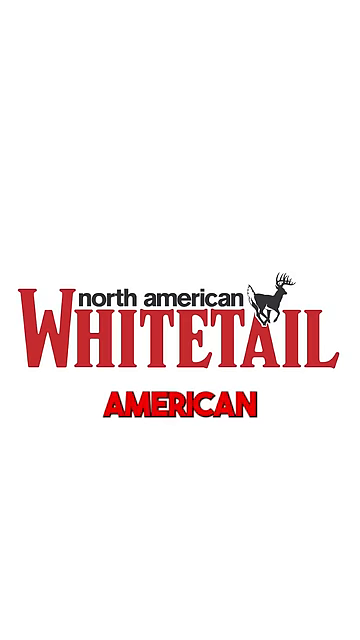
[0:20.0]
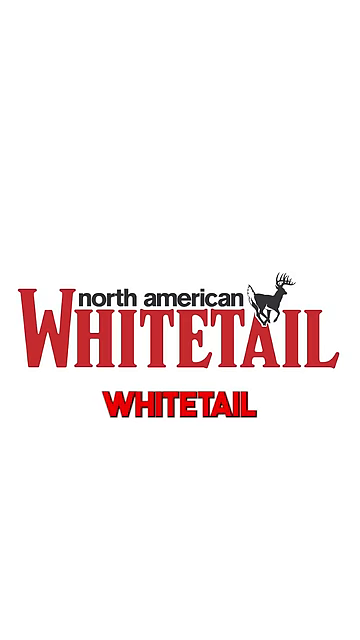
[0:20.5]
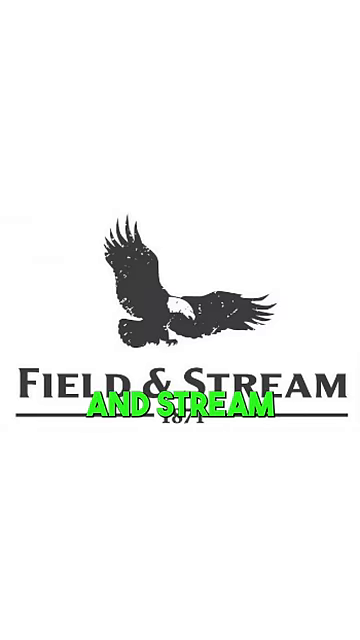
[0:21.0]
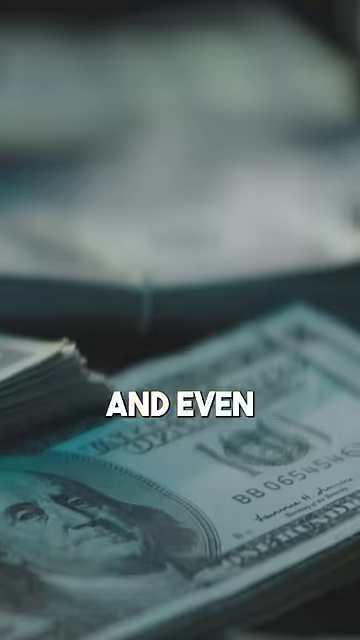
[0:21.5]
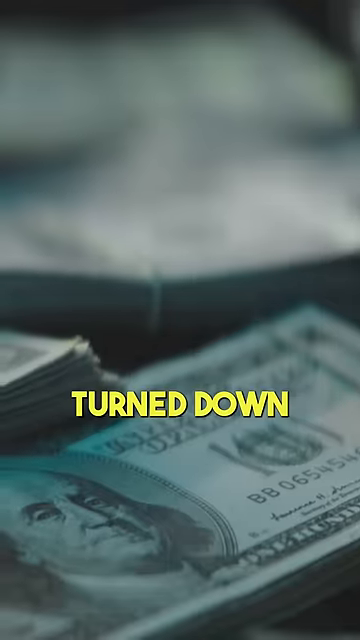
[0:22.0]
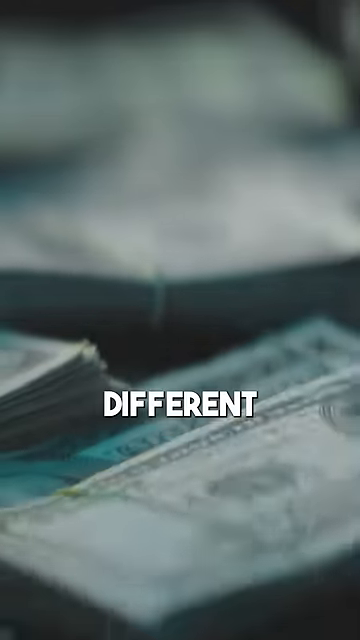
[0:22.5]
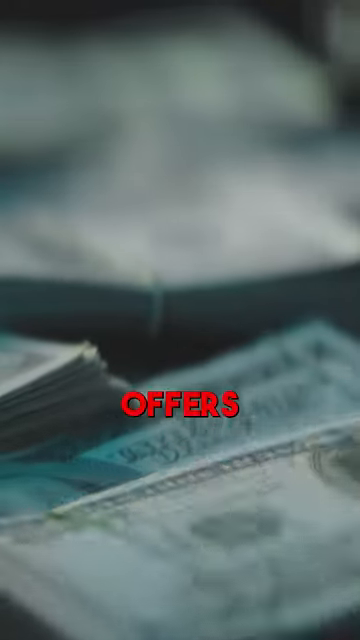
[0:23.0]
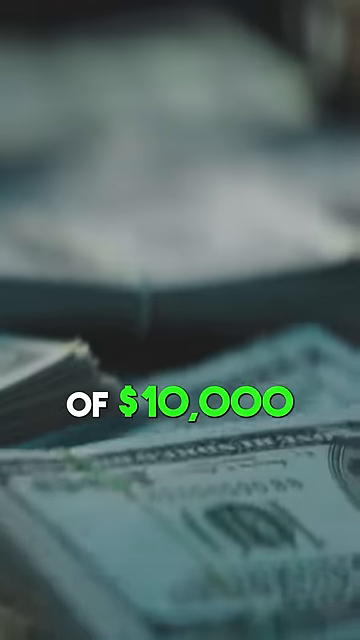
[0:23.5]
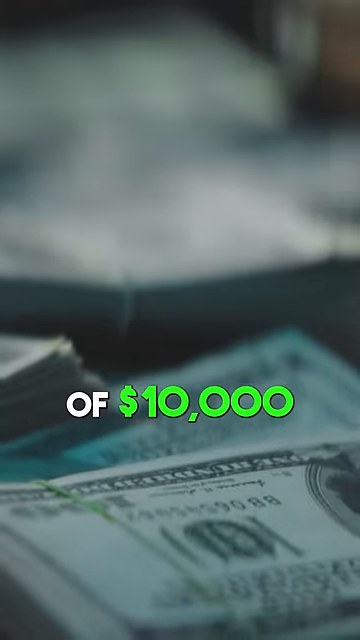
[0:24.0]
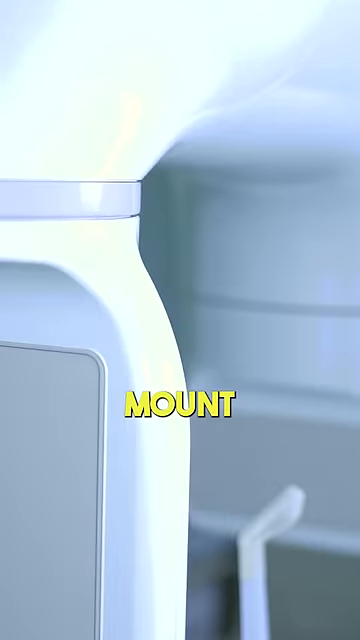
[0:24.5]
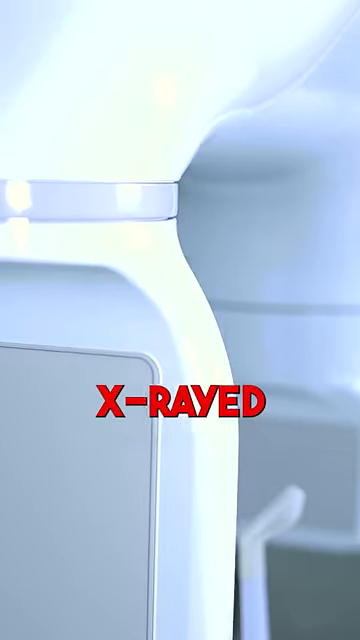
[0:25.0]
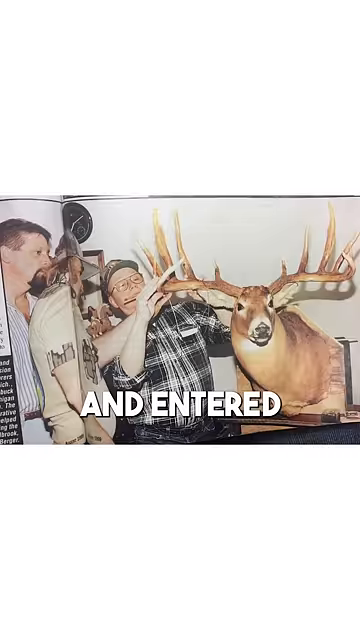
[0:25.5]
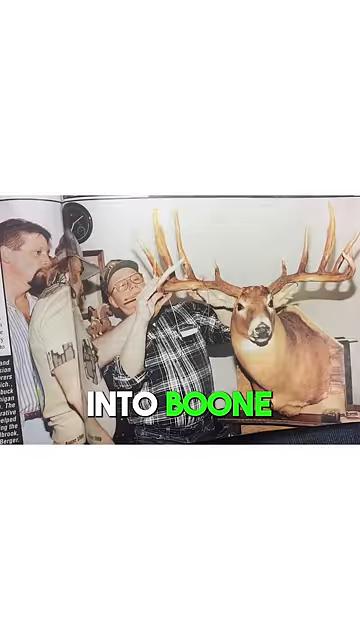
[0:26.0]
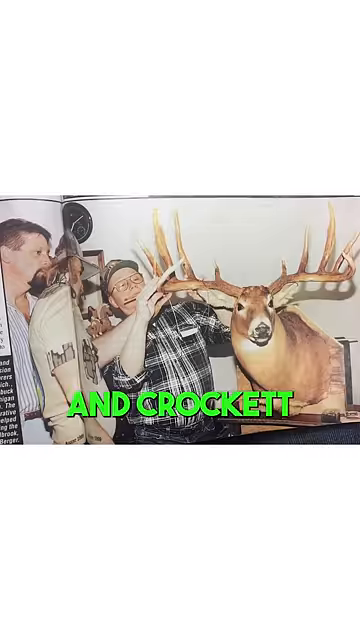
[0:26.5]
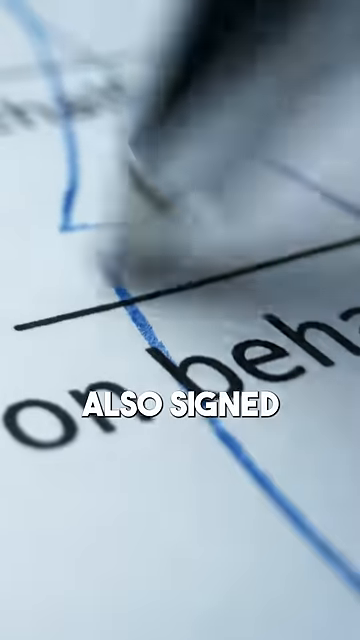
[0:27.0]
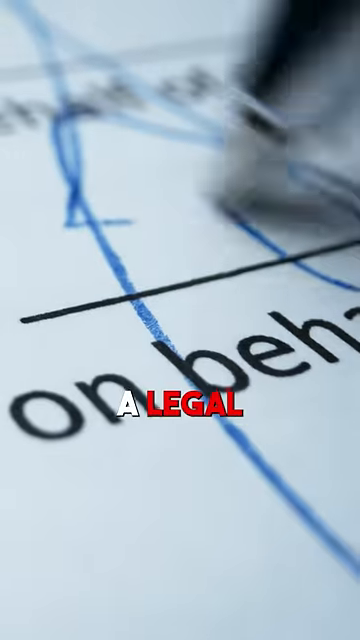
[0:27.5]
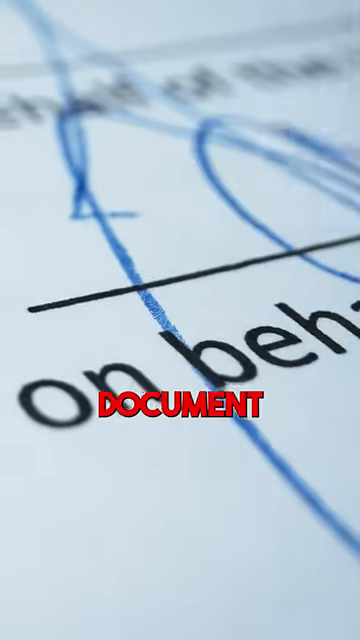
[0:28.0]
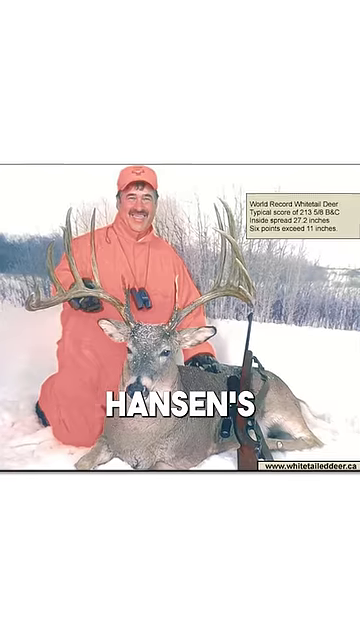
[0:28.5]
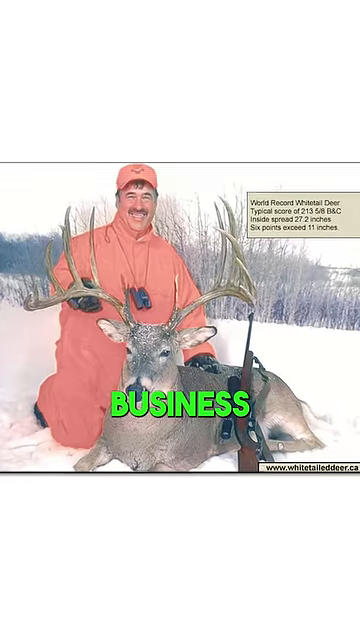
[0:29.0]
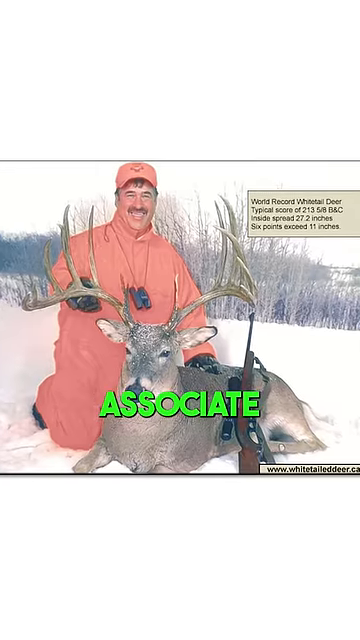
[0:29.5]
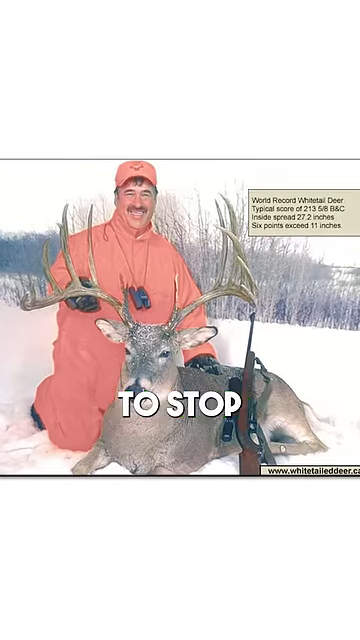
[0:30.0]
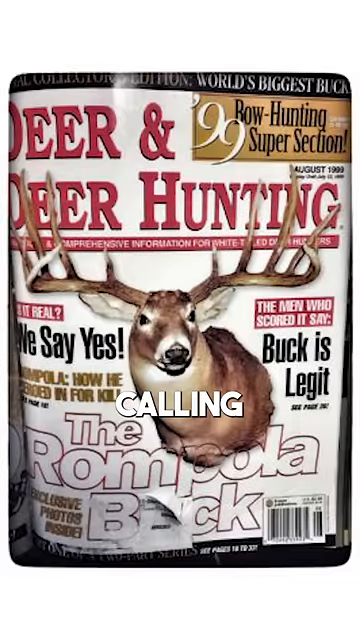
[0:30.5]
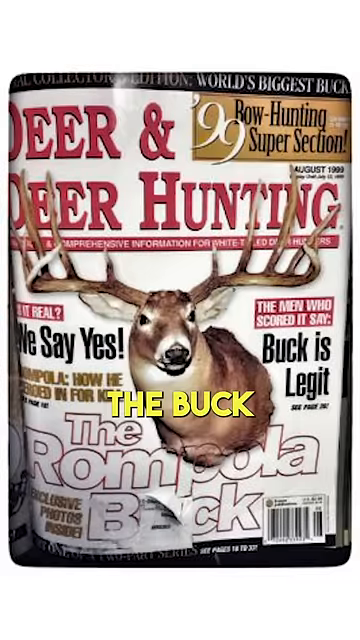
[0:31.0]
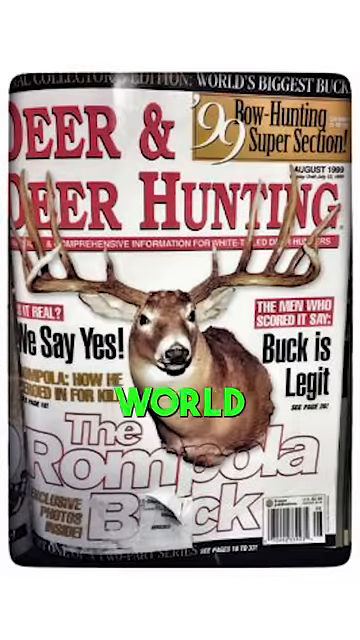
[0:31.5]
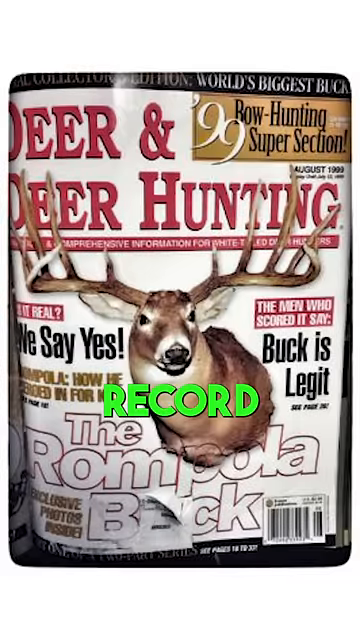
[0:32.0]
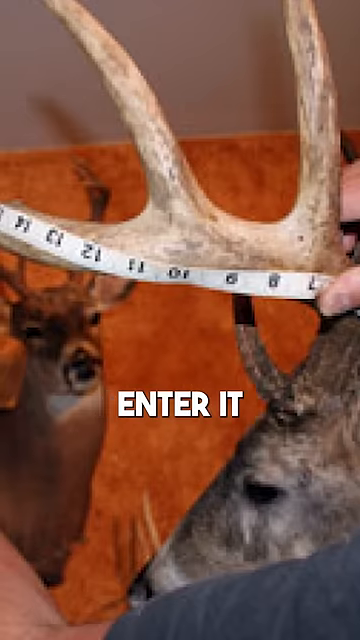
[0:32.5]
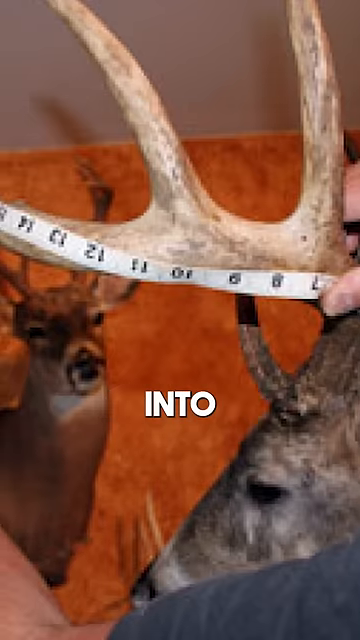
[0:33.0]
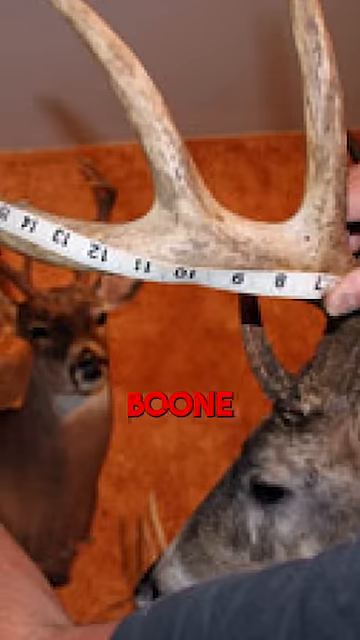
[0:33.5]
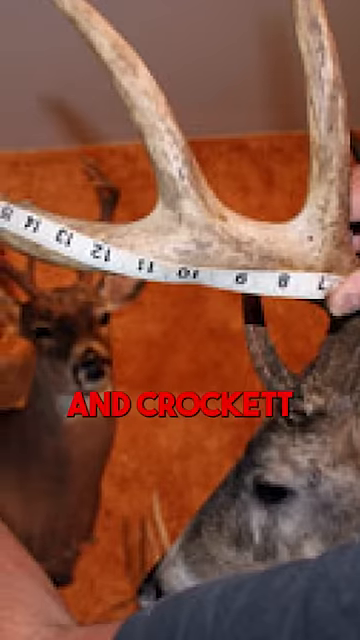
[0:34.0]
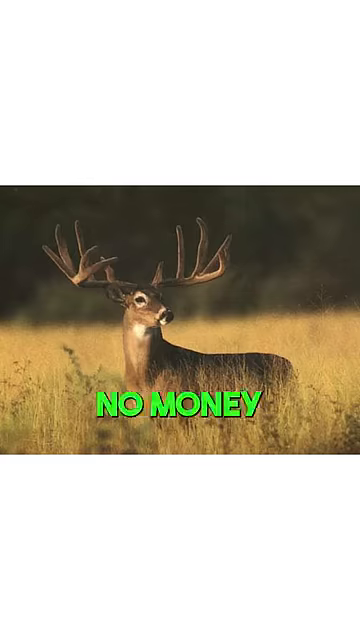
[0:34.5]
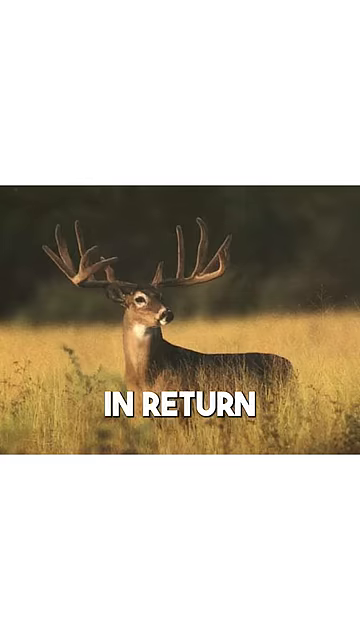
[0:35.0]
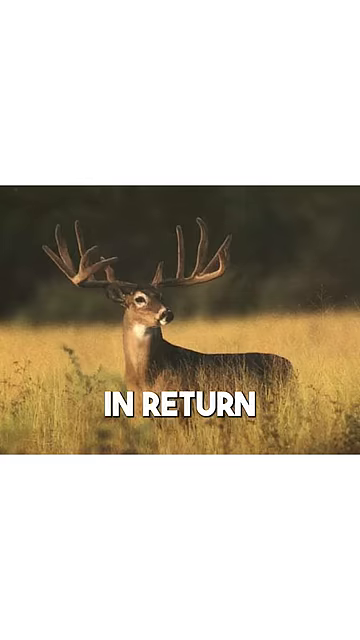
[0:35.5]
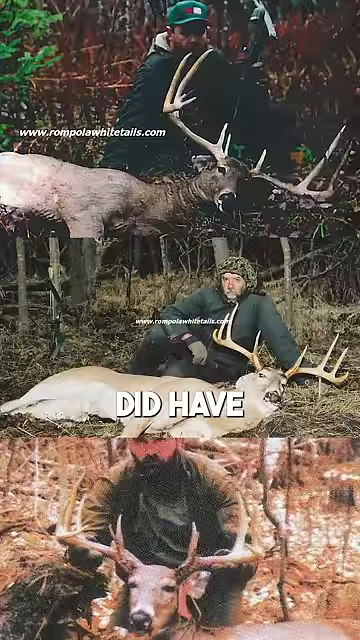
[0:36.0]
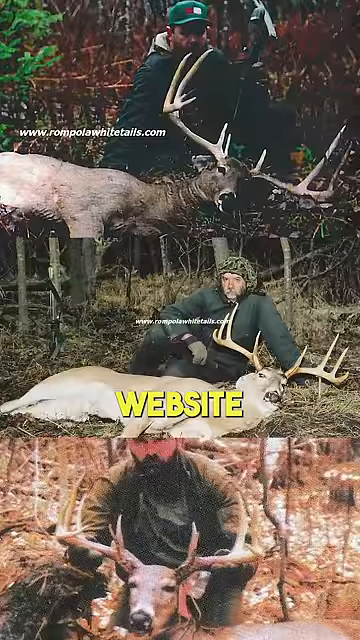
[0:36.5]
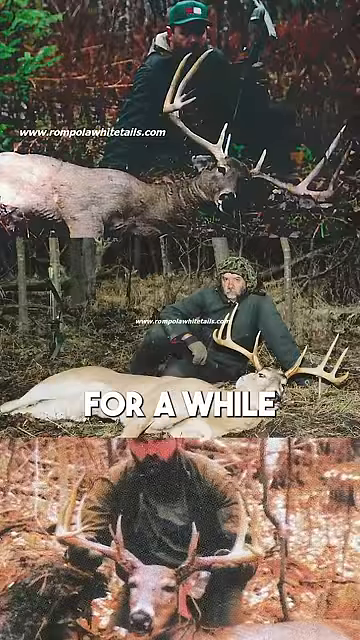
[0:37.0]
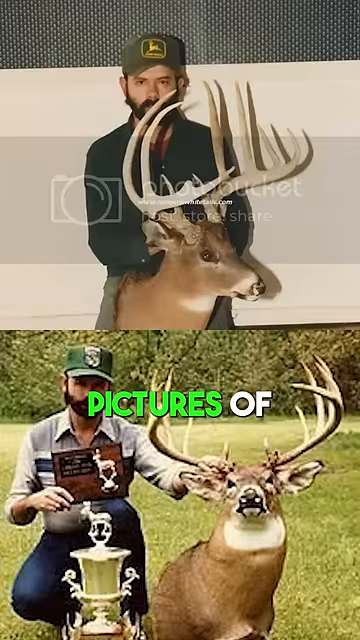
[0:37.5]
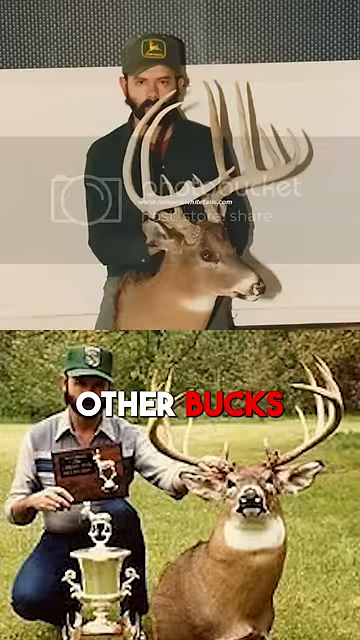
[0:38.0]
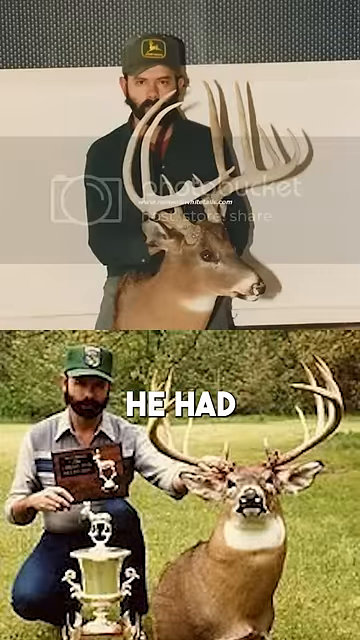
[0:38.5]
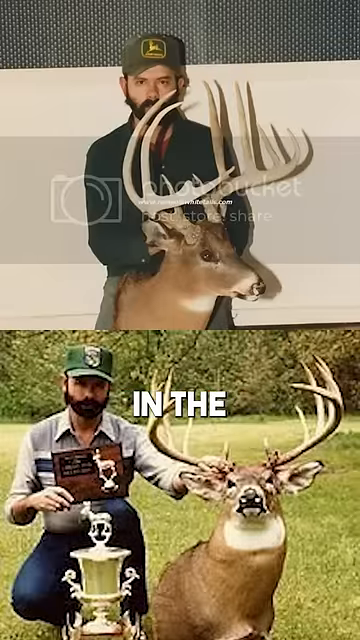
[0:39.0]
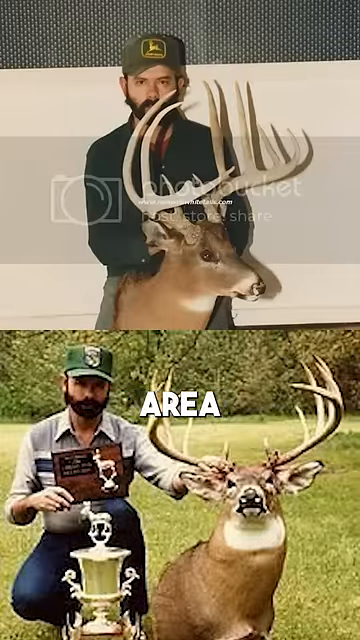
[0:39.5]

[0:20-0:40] The focus is on the deer known as the Rampola's buck and on the man who killed it, Mitri Rampola. The video states that the kill was a world record, that he was offered two different amounts of $10,000 and turned them down, and that a sales associate of Milo Hansen helped him sign a contract to remove the term world record.